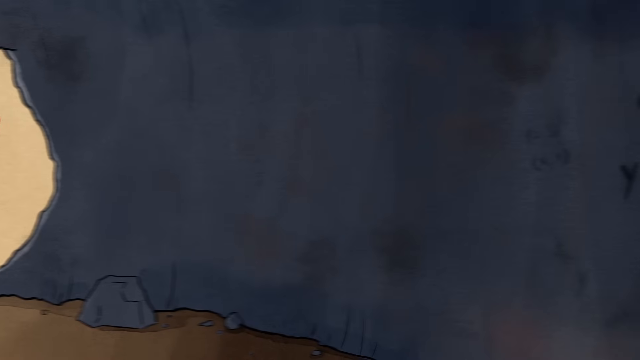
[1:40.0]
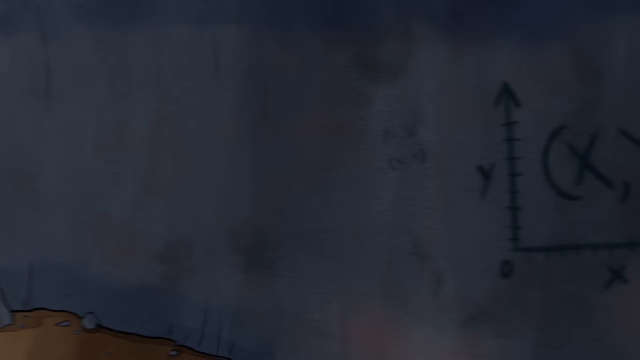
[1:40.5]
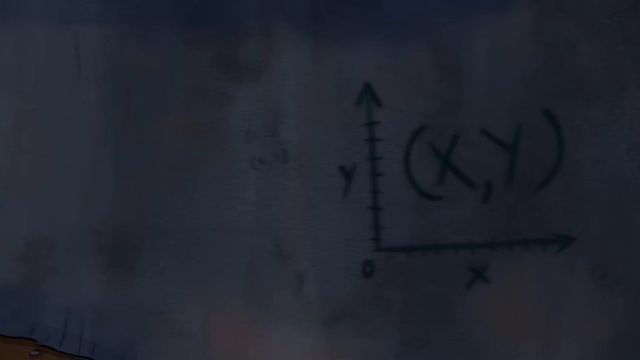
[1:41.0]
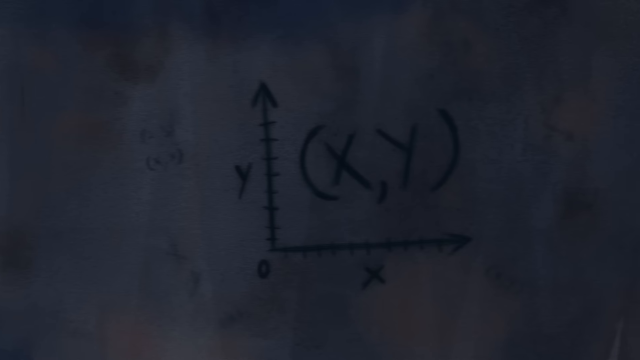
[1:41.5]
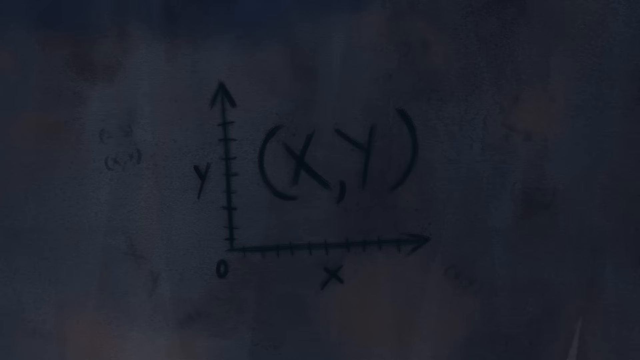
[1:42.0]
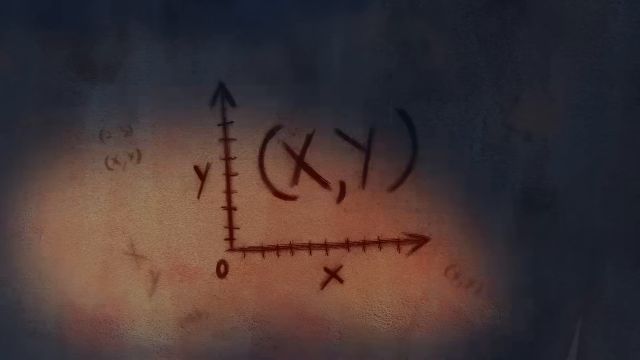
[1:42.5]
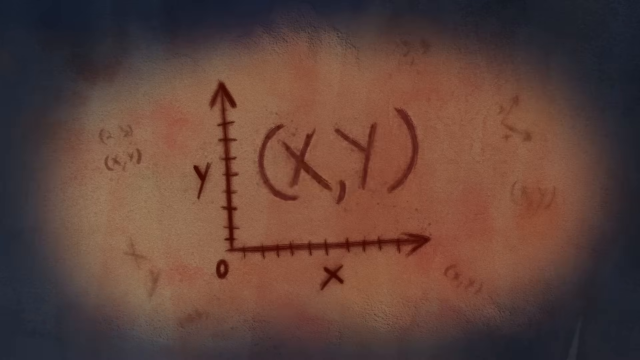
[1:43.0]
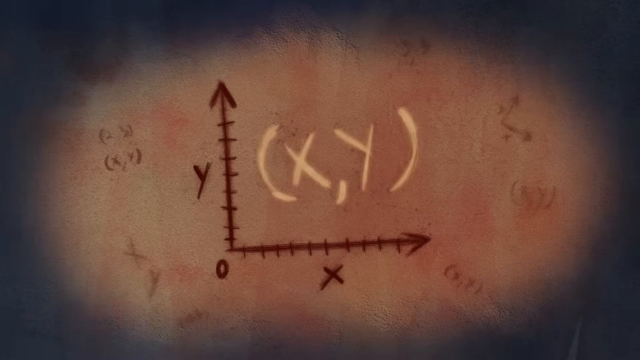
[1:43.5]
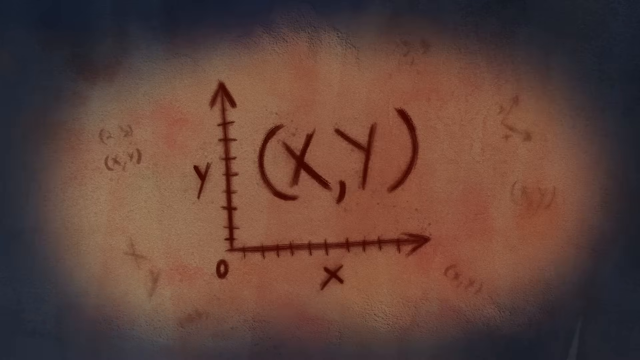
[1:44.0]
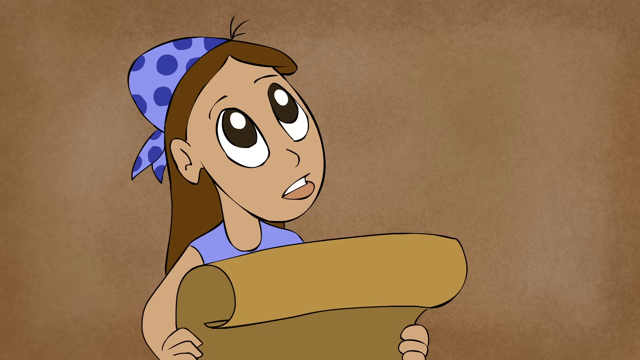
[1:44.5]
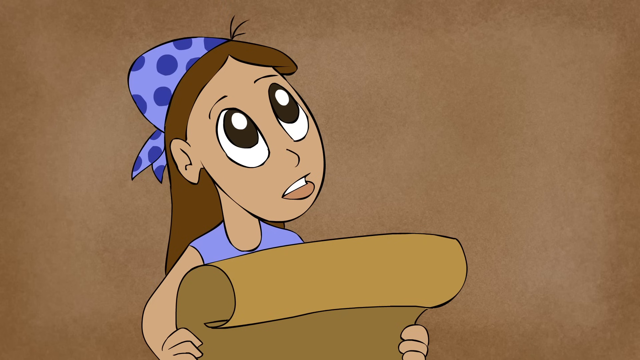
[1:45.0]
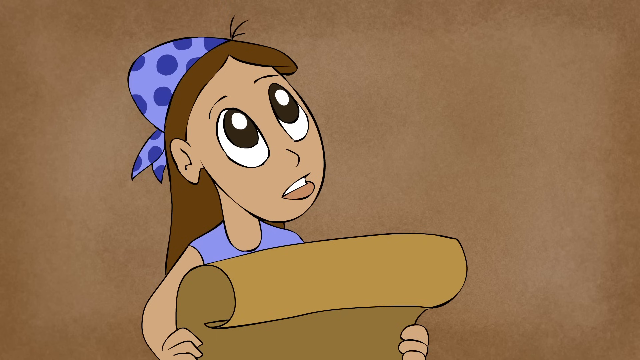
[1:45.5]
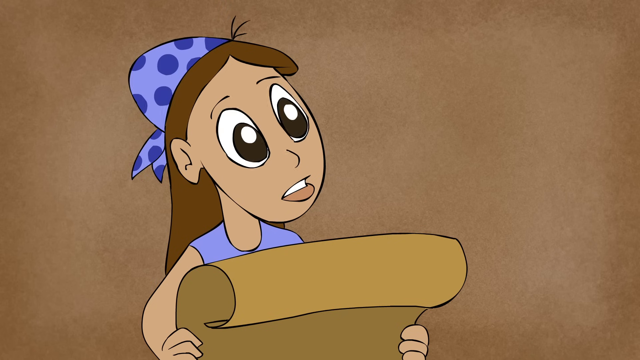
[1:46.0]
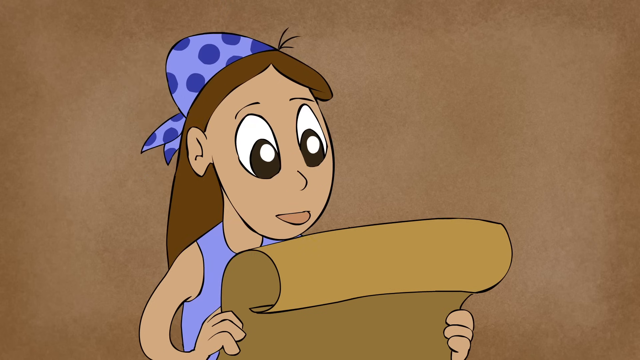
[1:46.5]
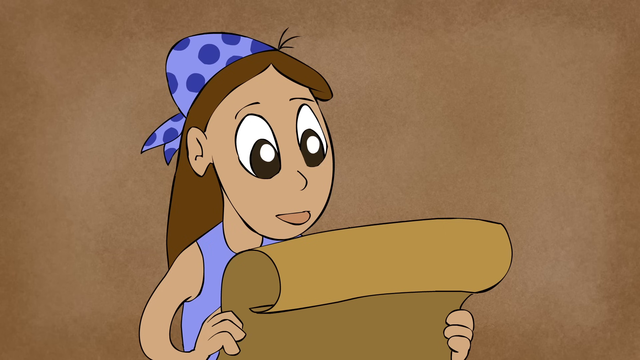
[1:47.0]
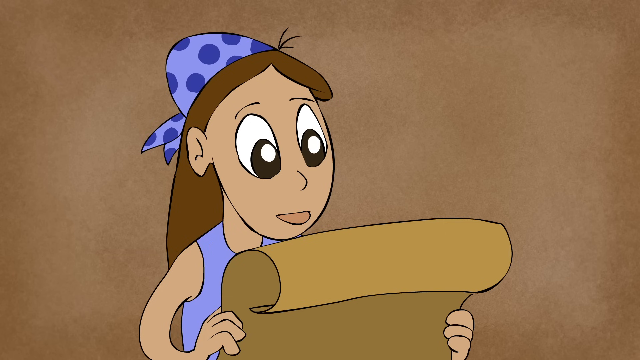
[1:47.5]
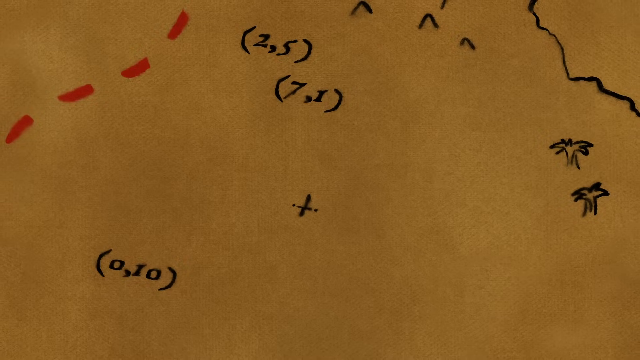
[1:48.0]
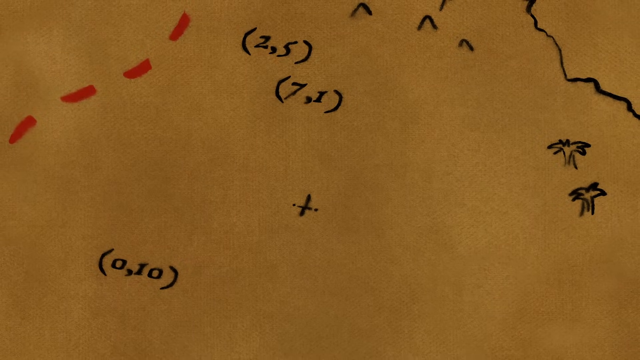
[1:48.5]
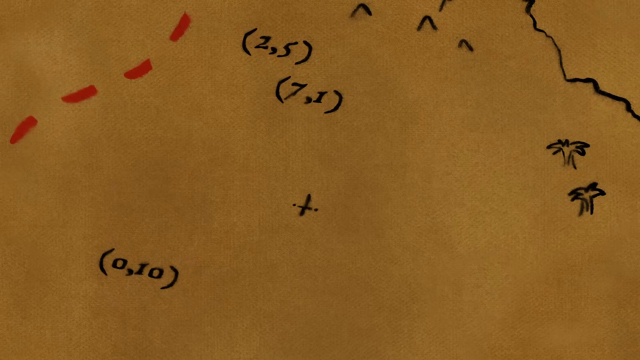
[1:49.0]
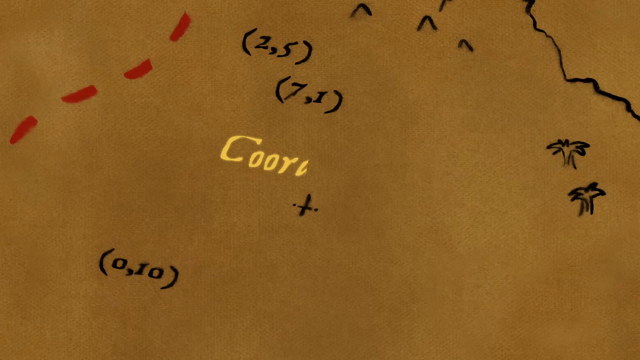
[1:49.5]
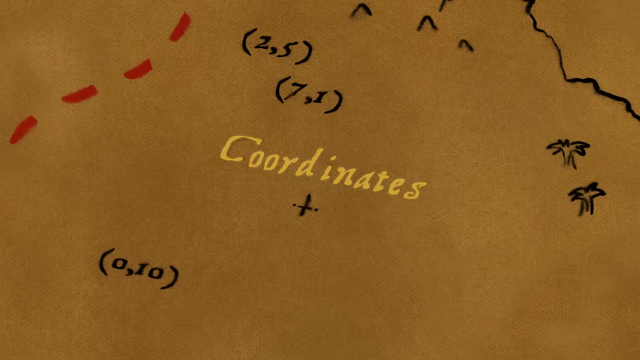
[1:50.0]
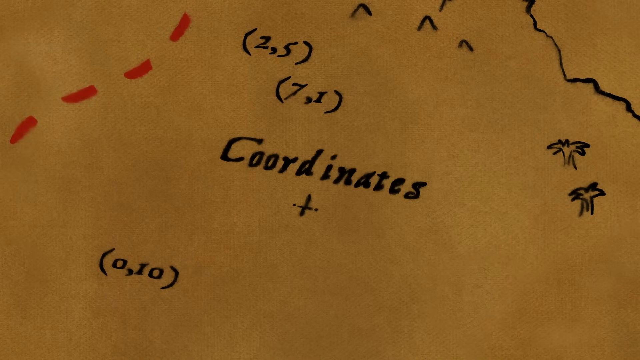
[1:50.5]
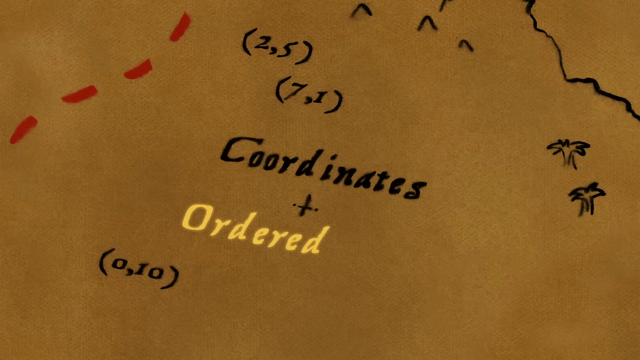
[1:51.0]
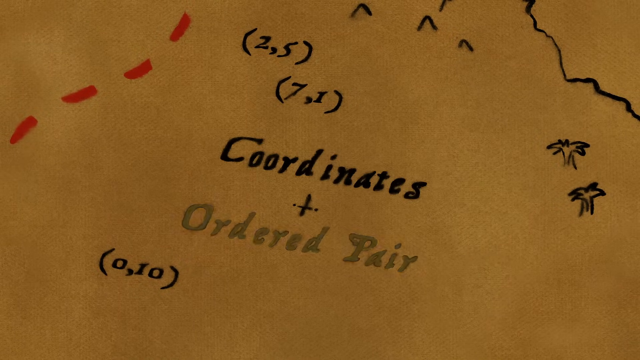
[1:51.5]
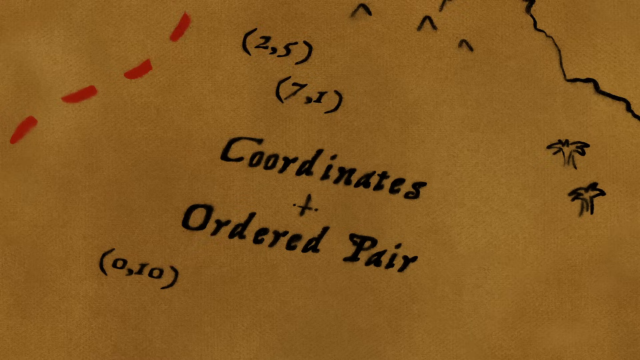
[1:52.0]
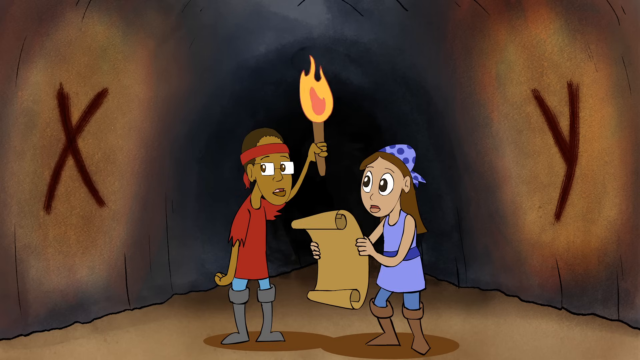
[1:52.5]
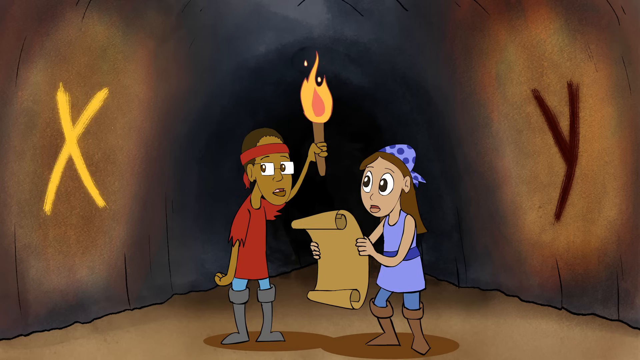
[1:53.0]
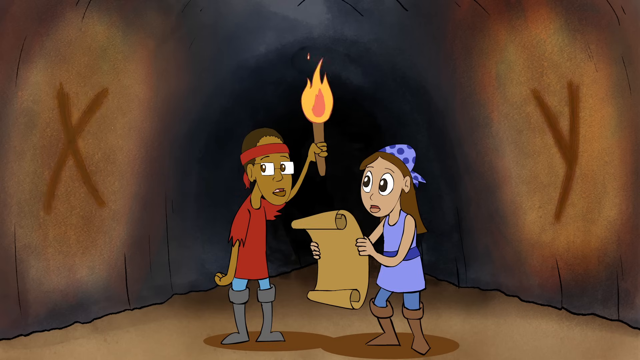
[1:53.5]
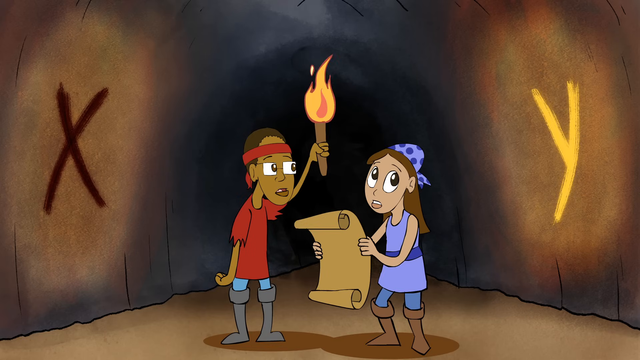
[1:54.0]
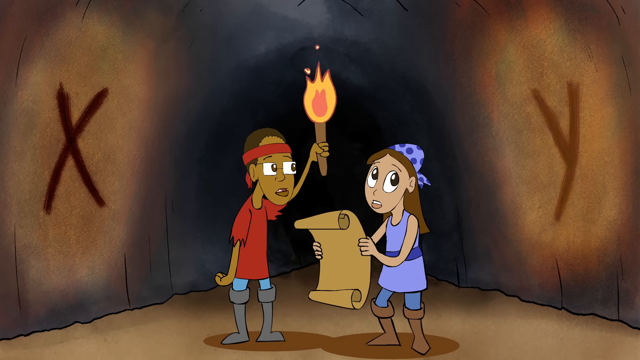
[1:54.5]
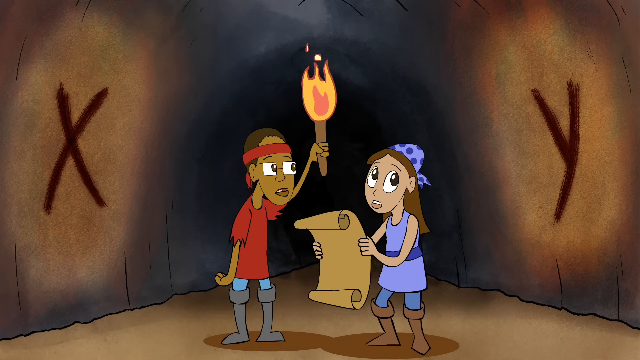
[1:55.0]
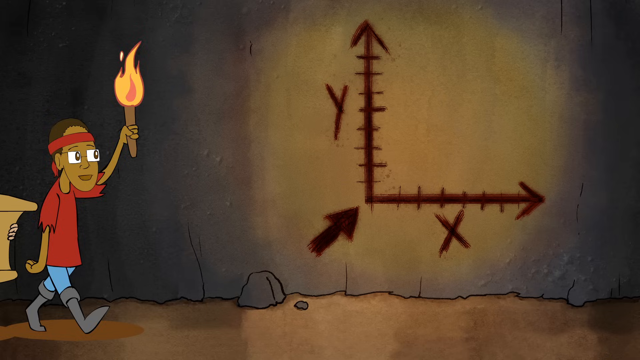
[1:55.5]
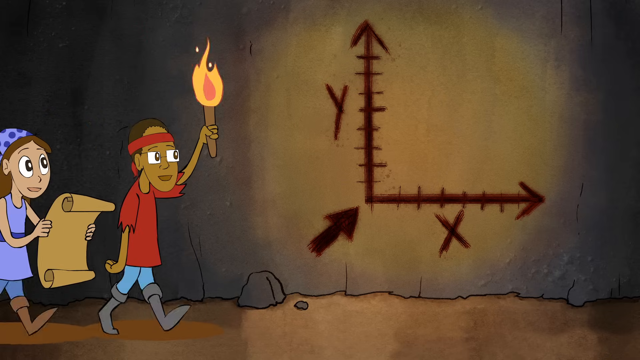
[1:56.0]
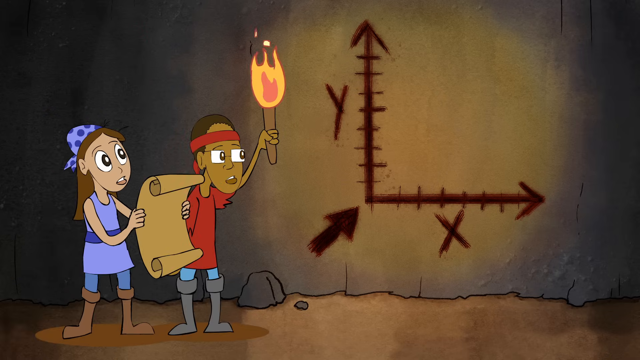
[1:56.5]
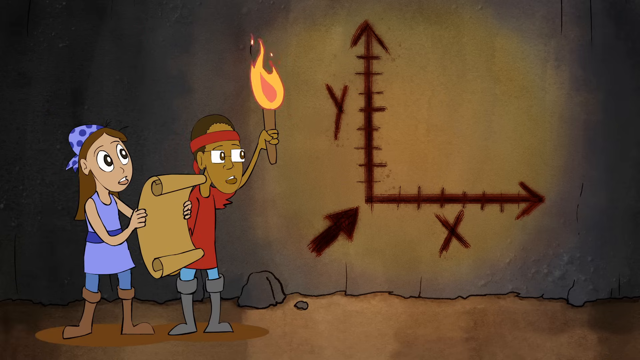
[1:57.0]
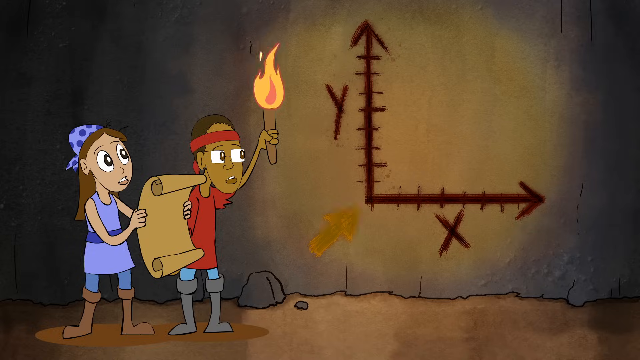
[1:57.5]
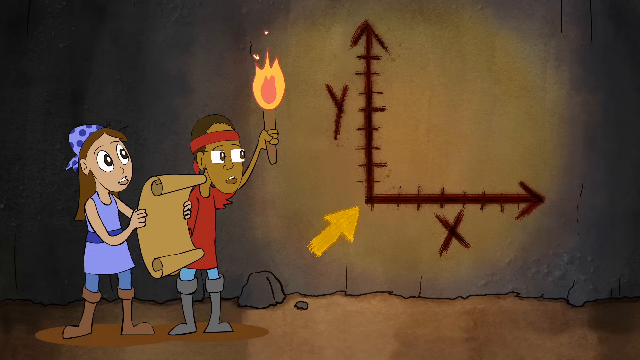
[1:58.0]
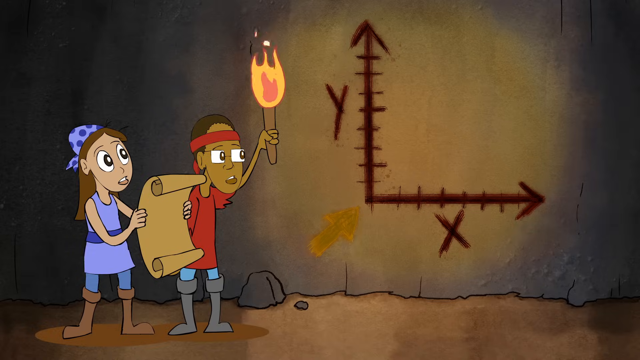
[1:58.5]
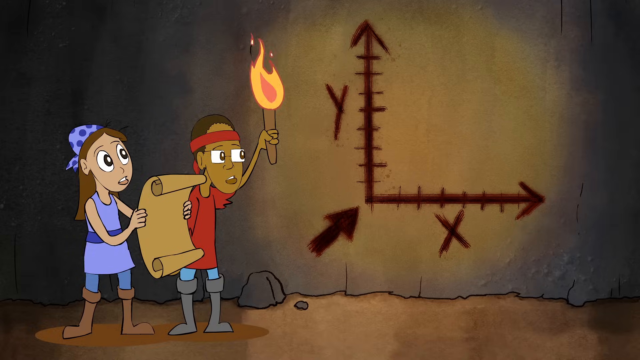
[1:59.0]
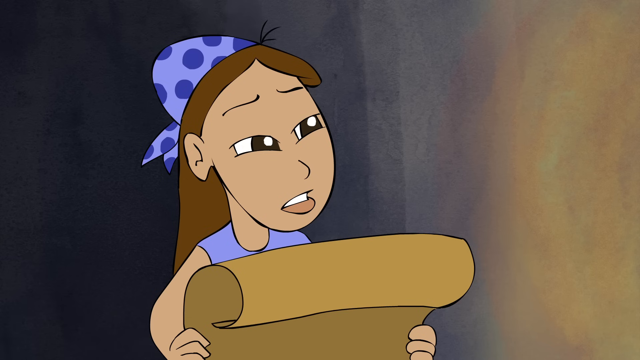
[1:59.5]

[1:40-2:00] A table shows two paths, with "X" and "Y" written on it, indicating that X is the horizontal line and Y is the vertical line. The boy and girl show the path according to their instructions; they have a map in hand, and the girl looks at the map trying to understand X and Y. X indicates the path forward and Y indicates going to the upper level.